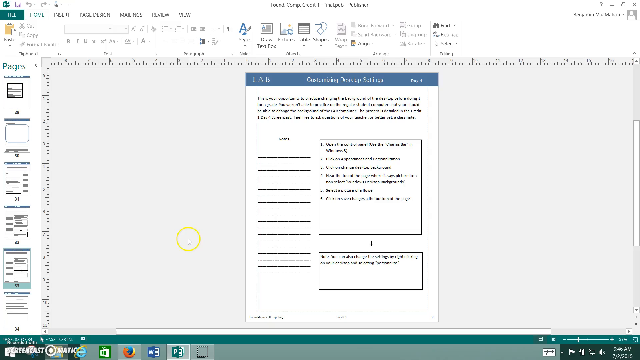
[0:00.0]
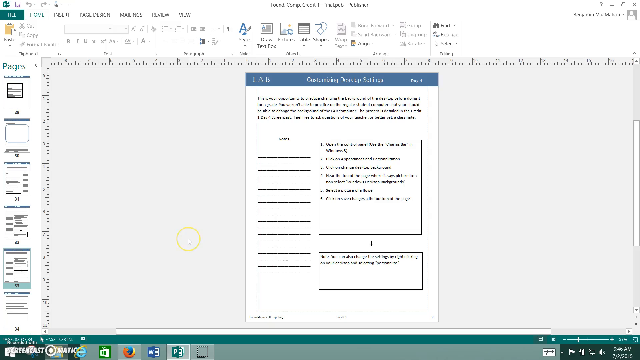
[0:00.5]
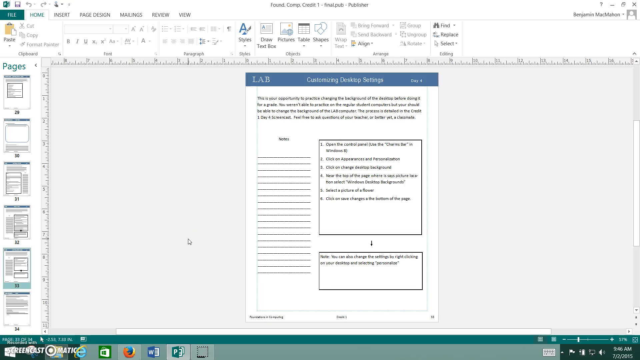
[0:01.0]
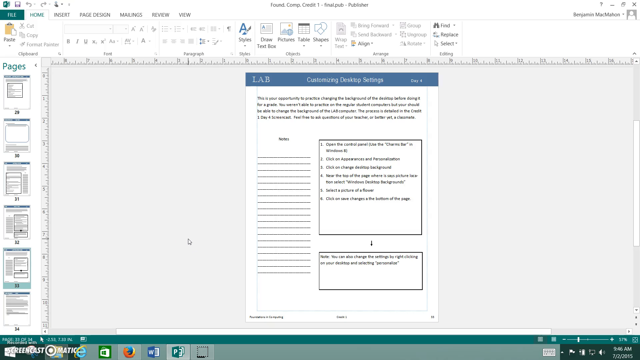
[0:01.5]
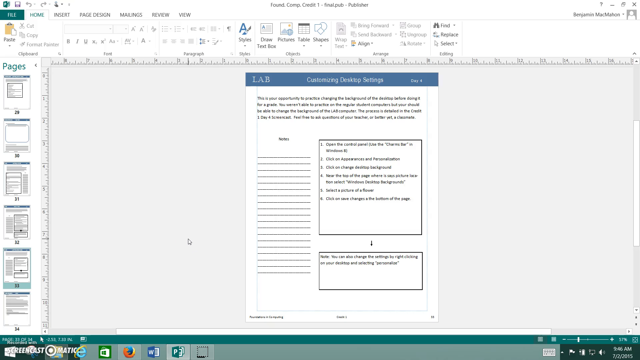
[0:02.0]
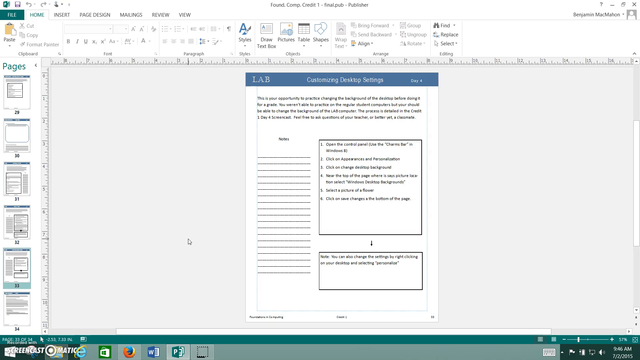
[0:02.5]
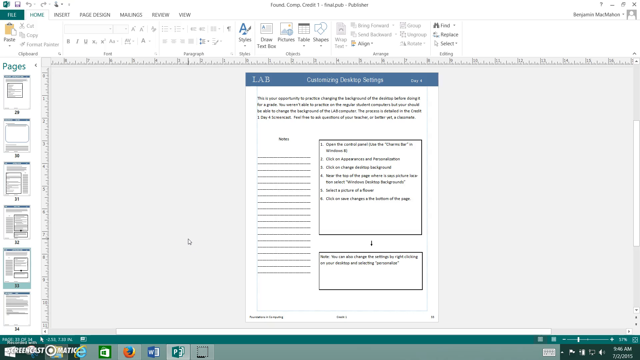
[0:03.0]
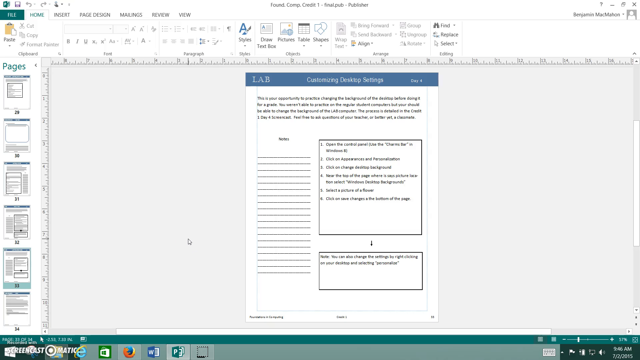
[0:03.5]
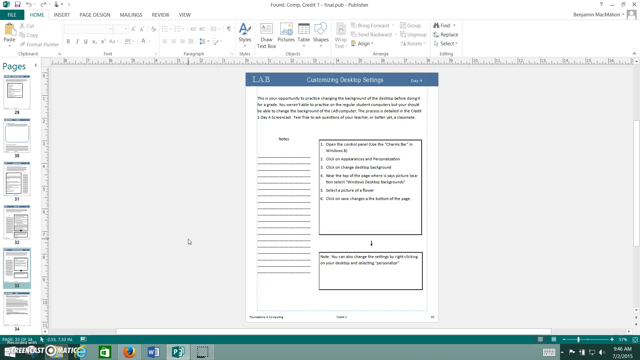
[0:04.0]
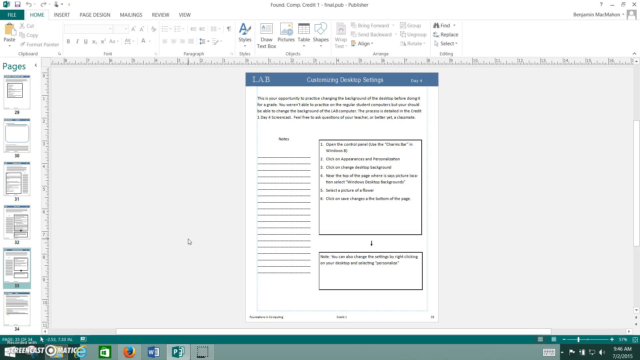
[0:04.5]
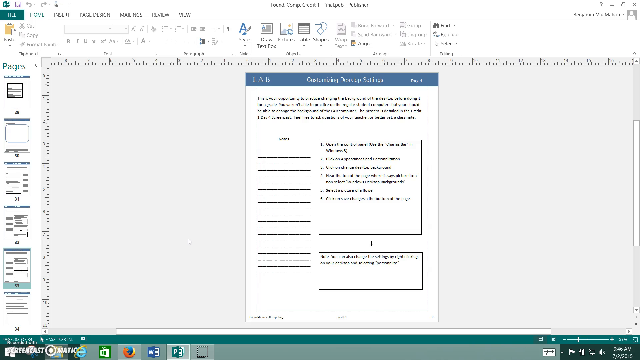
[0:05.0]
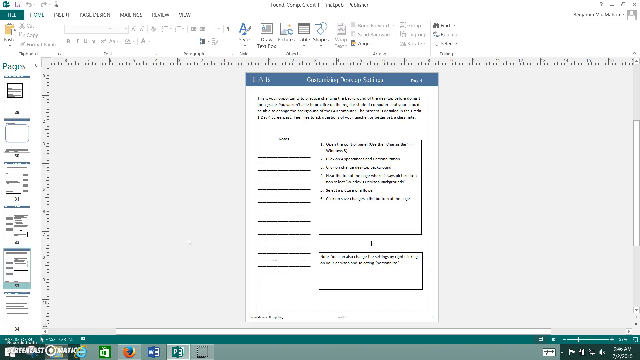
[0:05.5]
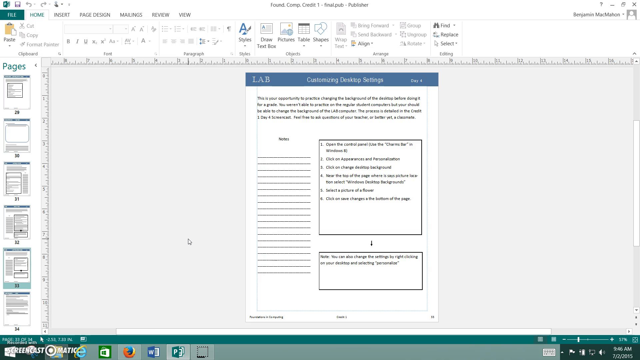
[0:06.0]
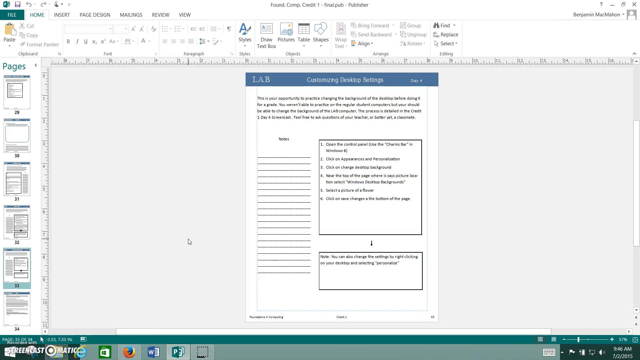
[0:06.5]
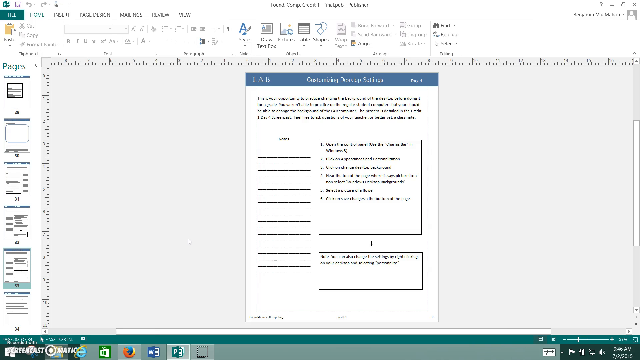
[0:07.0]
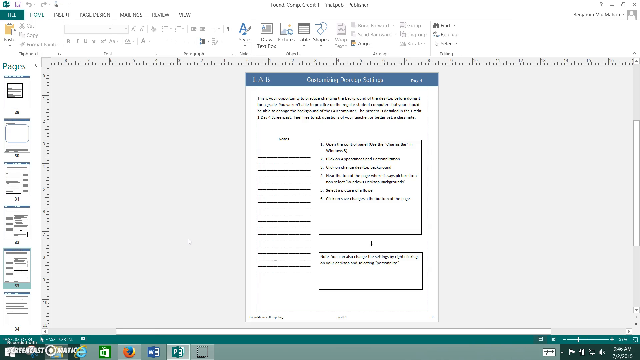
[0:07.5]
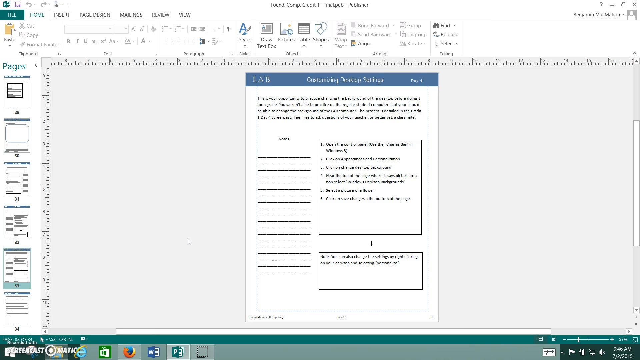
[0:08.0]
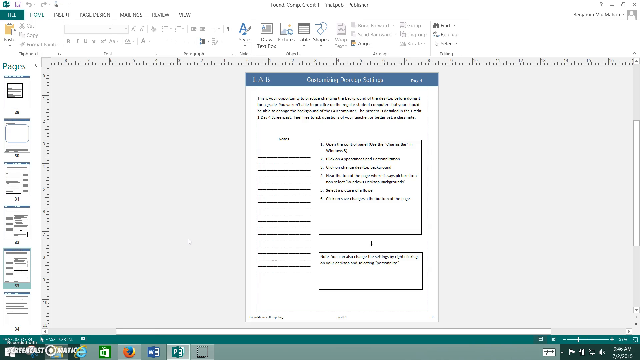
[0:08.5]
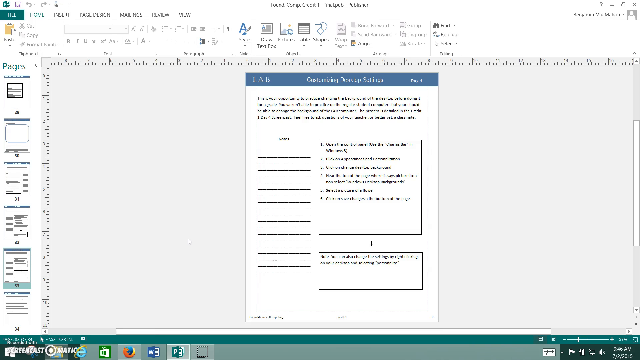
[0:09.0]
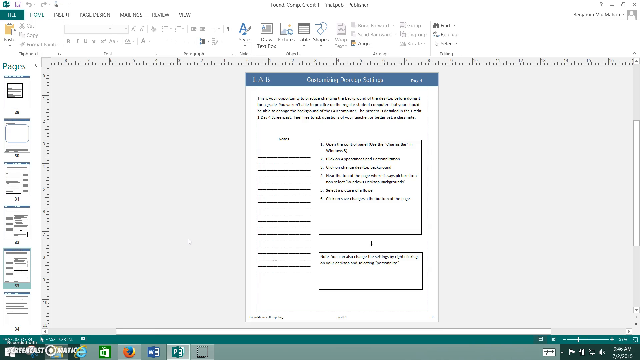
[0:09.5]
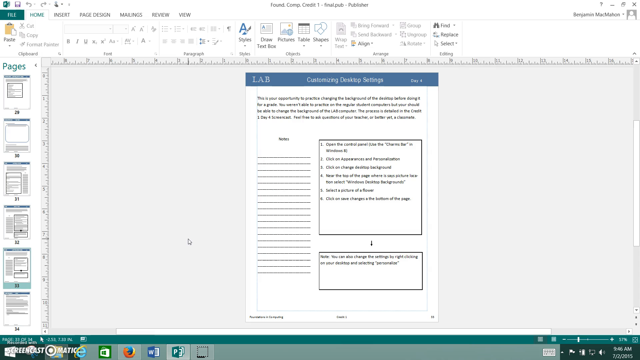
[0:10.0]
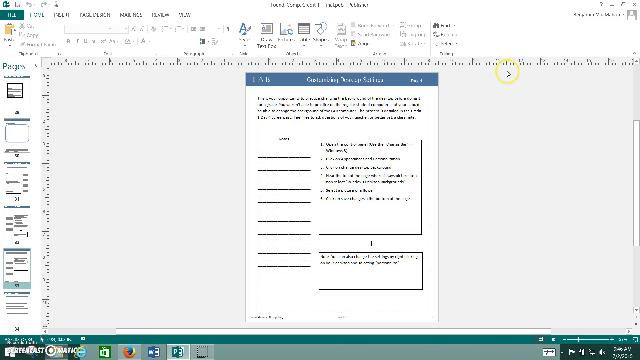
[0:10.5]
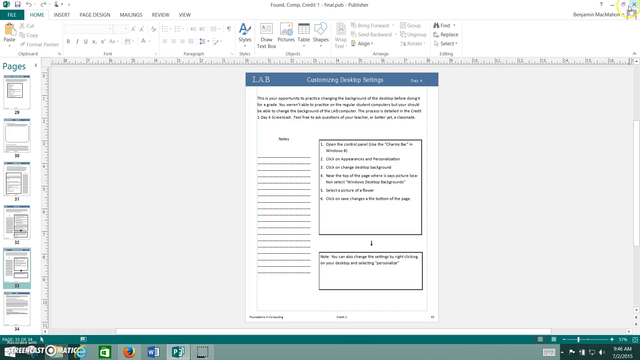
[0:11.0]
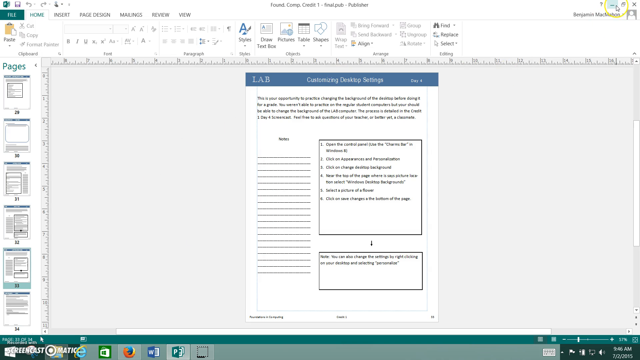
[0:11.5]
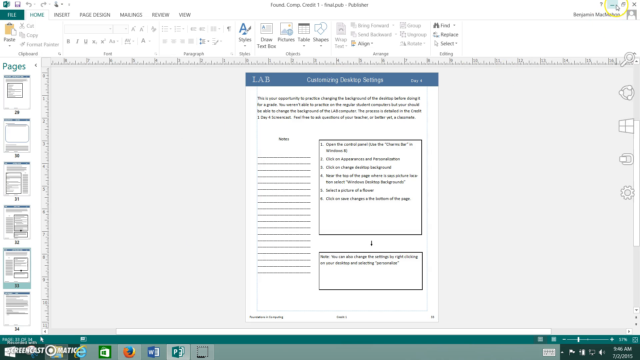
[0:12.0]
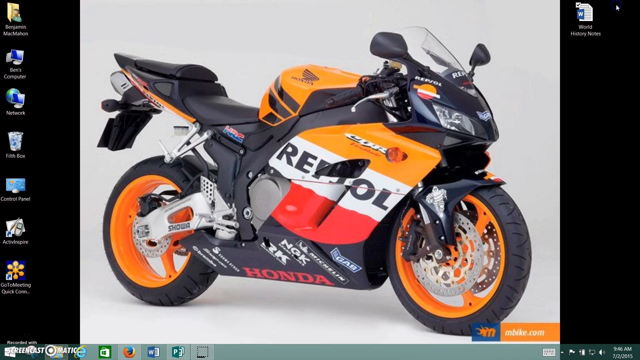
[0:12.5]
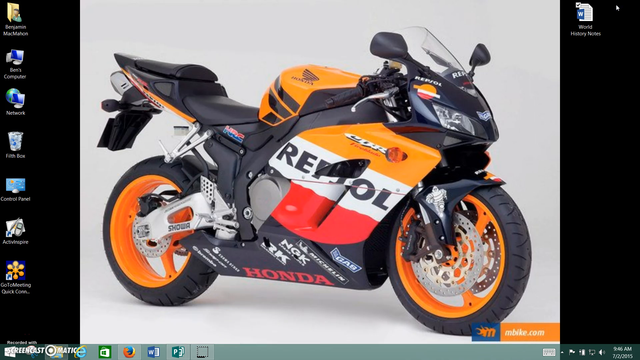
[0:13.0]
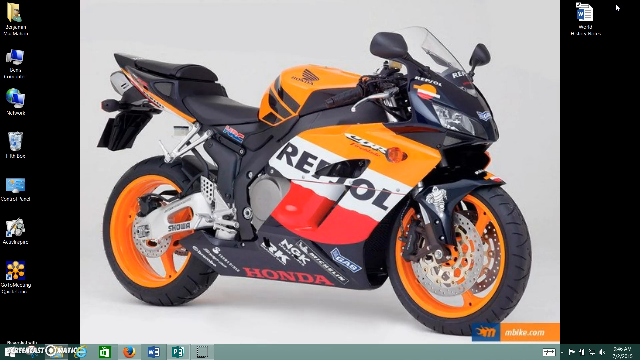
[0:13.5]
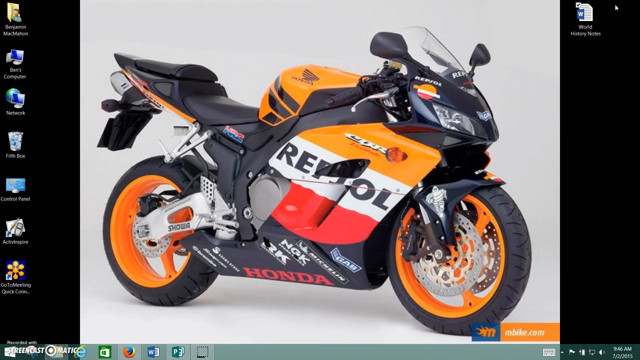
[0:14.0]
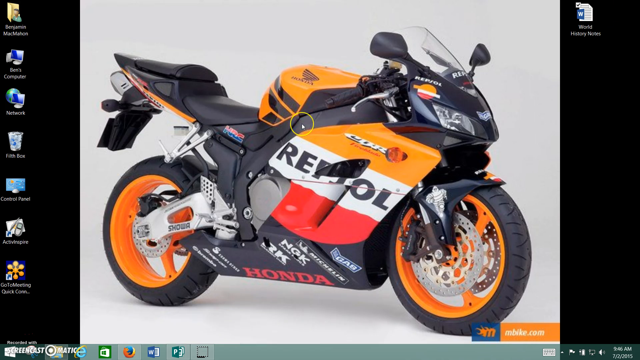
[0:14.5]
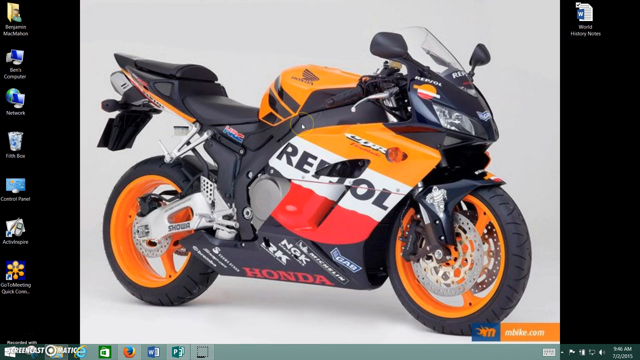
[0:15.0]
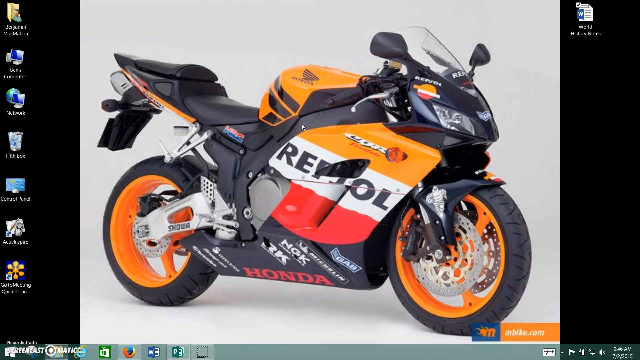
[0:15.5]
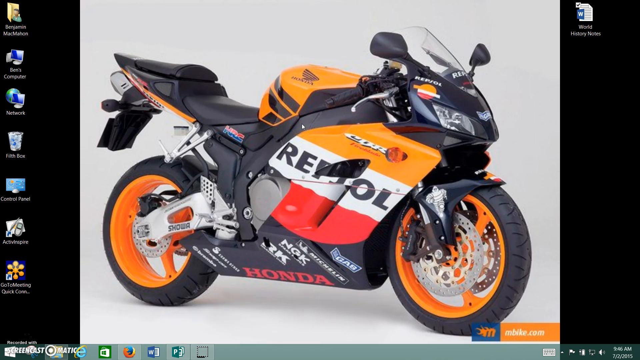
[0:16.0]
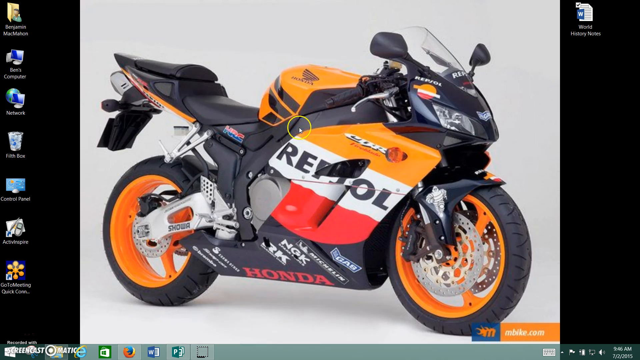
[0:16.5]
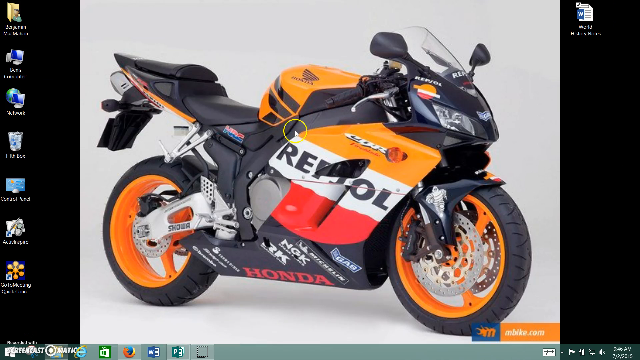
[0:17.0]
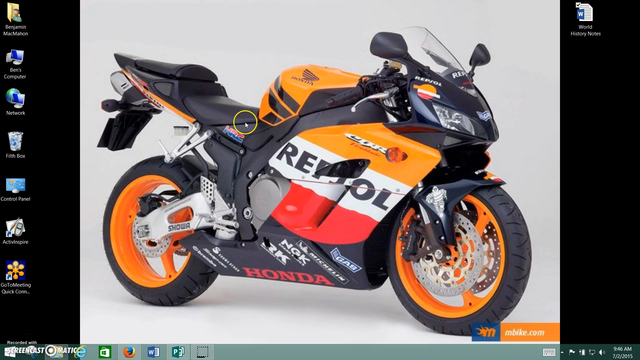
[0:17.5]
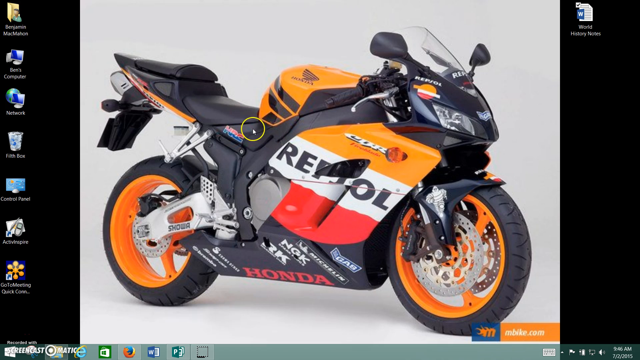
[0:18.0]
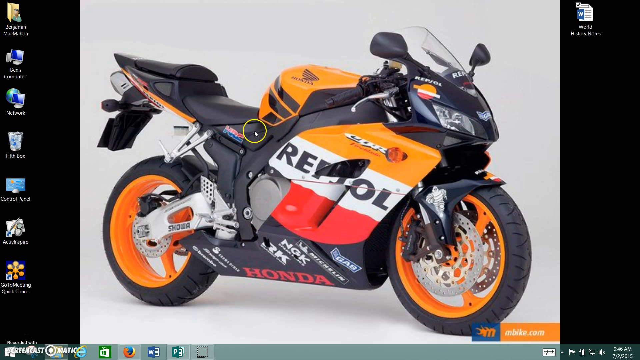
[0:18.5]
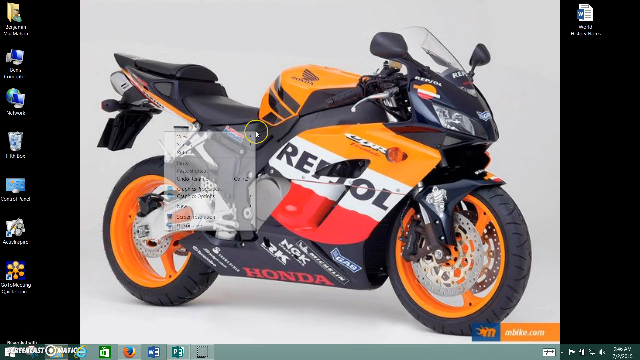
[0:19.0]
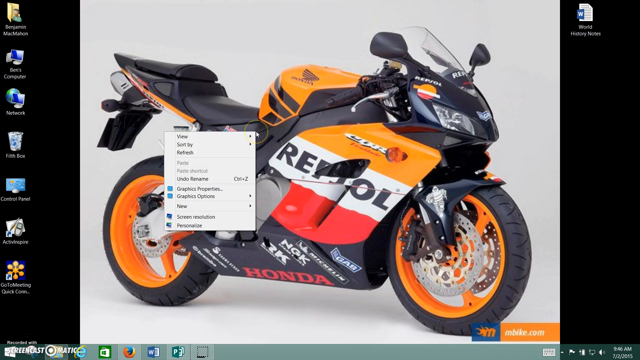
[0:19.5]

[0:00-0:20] A Publisher document is open to a page titled "customizing desktop settings," with directions on how to customize Windows desktop settings. The video then cuts to the desktop of a Windows computer, whose background is a Honda motorcycle. The motorcycle is black with orange, white and red markings and has the word "Repsol" on it. The picture of the motorcycle is not stretched all the way and does not take up the entire desktop; it is kind of letterboxed, with black bars on both the left and right sides of the image. The background of the desktop image is a plain beige color, and there is a shadow underneath the motorcycle. Several folders and icons are on the desktop, including My Computer, Network, the Recycle Bin and the Control Panel. The user moves the mouse cursor around, right-clicks on the desktop and shows the right-click options.